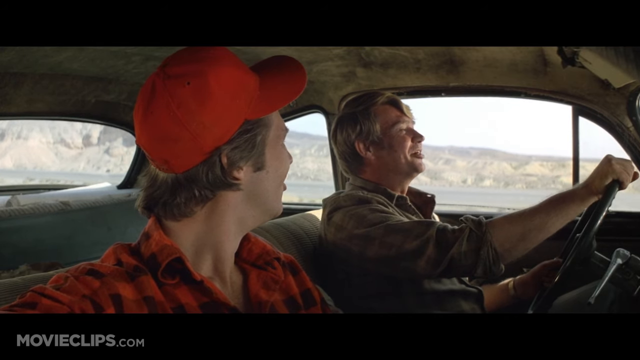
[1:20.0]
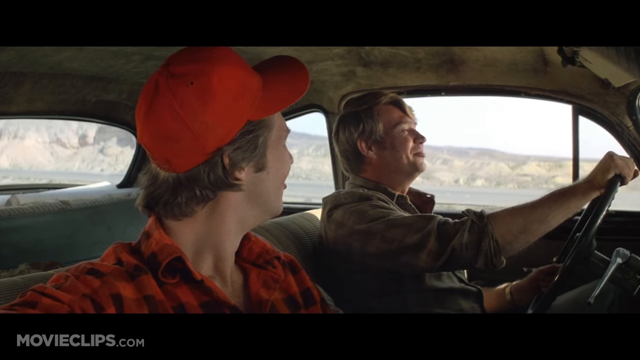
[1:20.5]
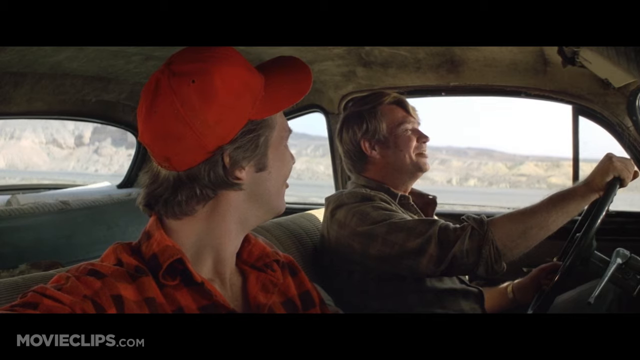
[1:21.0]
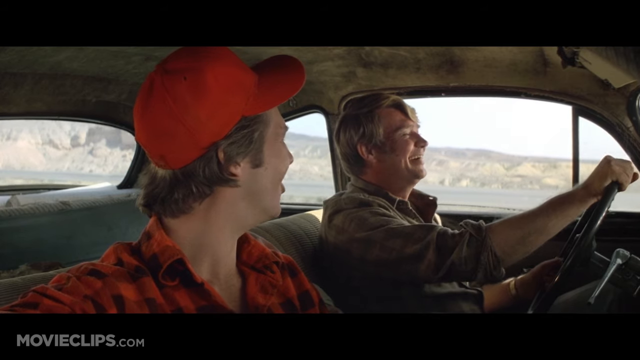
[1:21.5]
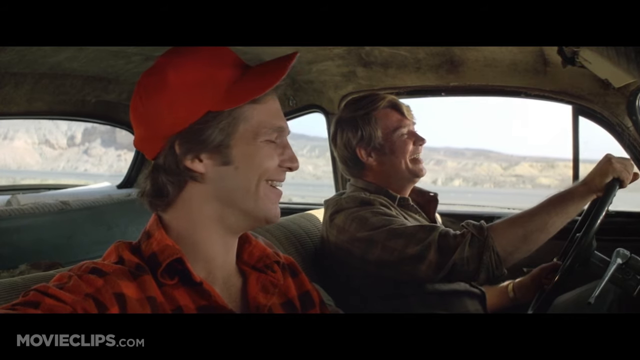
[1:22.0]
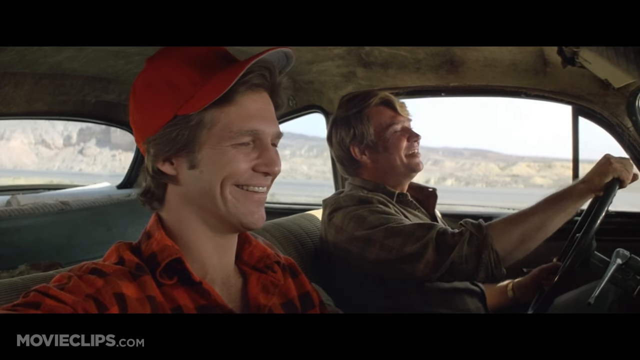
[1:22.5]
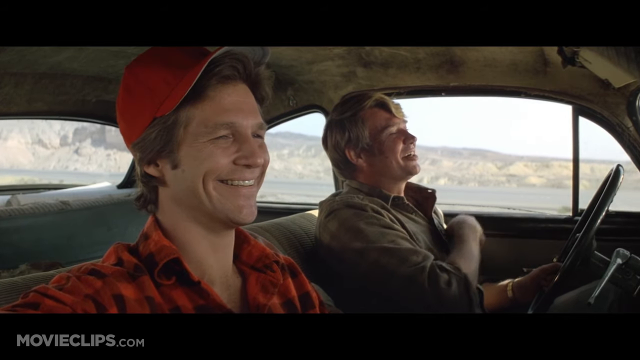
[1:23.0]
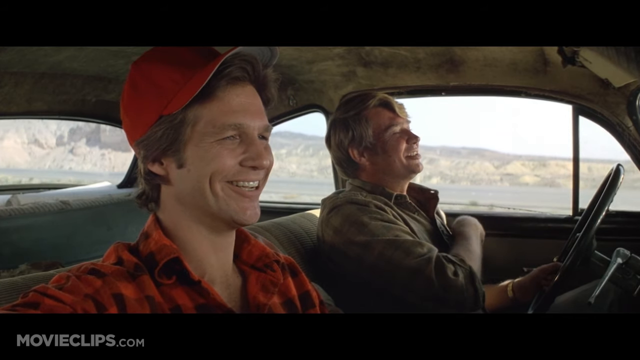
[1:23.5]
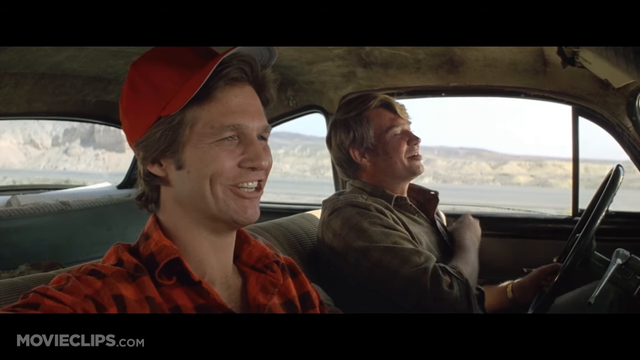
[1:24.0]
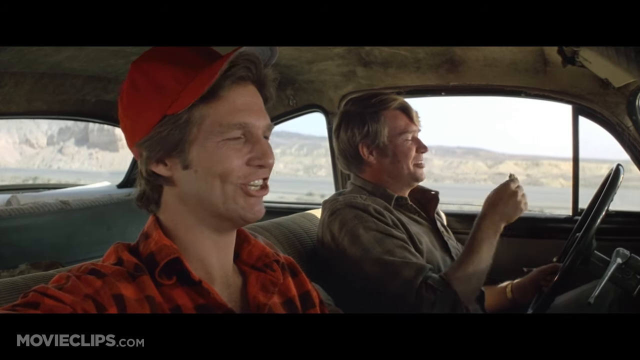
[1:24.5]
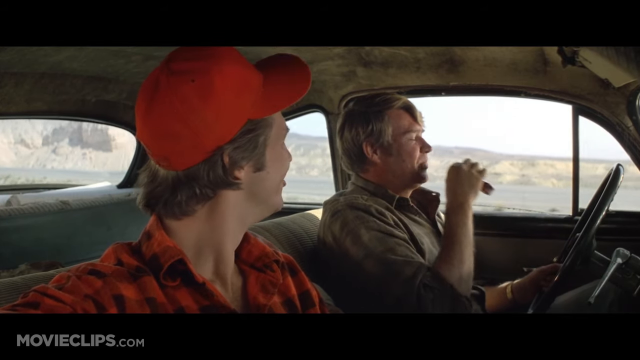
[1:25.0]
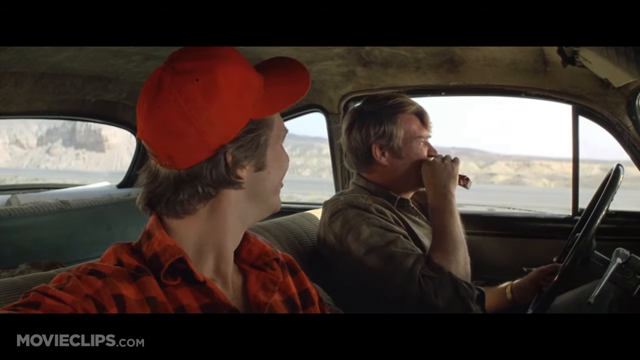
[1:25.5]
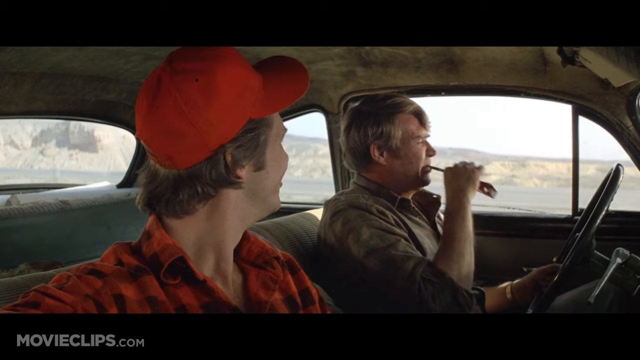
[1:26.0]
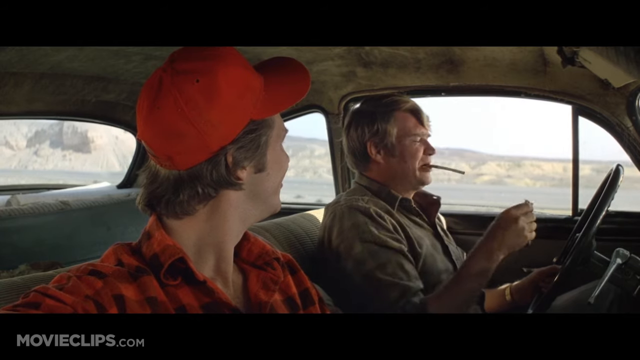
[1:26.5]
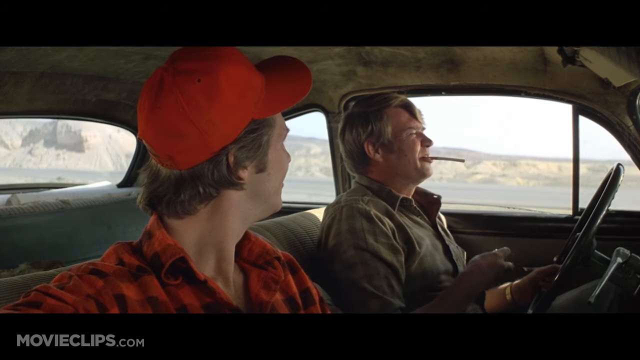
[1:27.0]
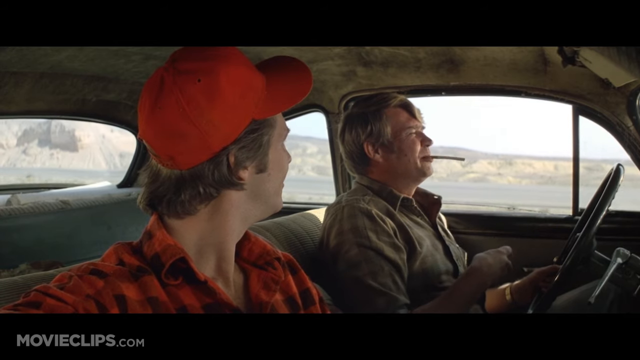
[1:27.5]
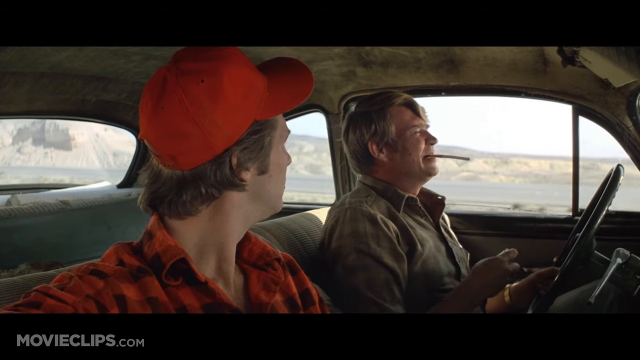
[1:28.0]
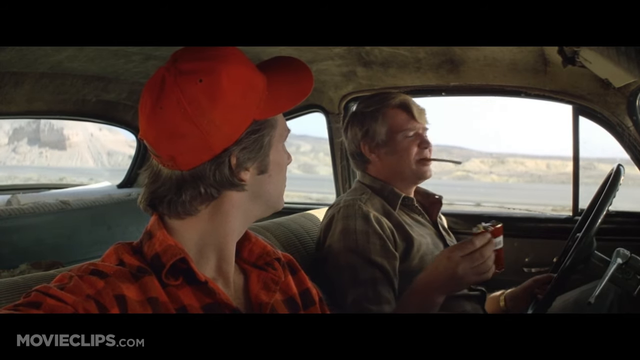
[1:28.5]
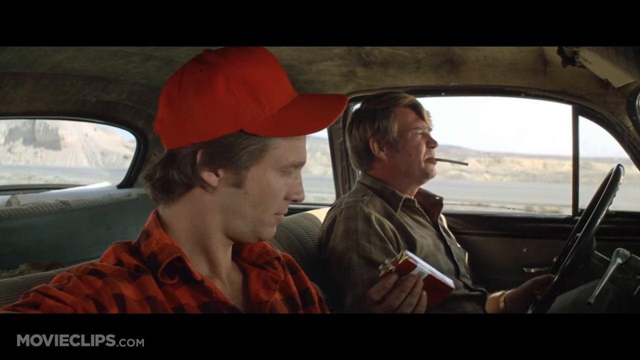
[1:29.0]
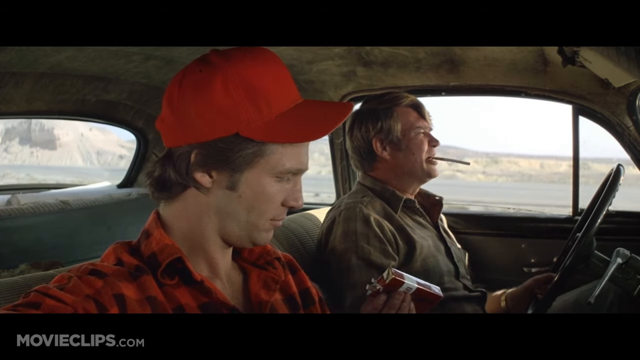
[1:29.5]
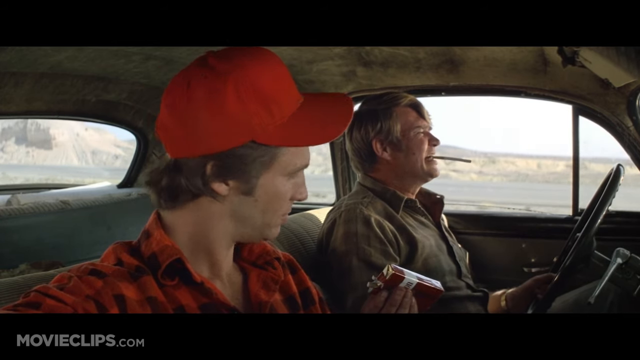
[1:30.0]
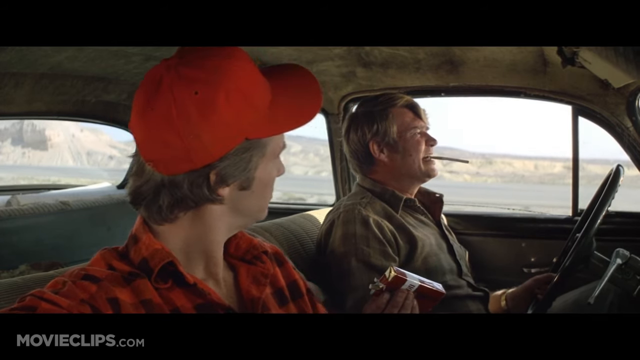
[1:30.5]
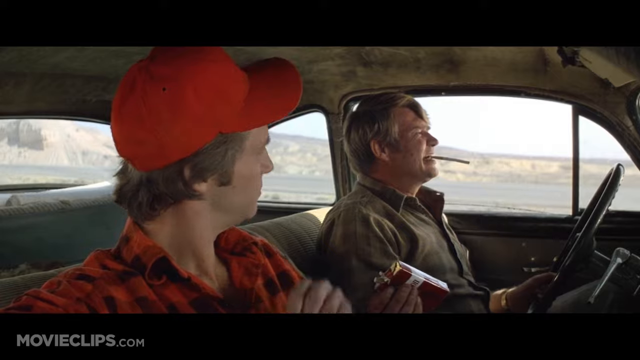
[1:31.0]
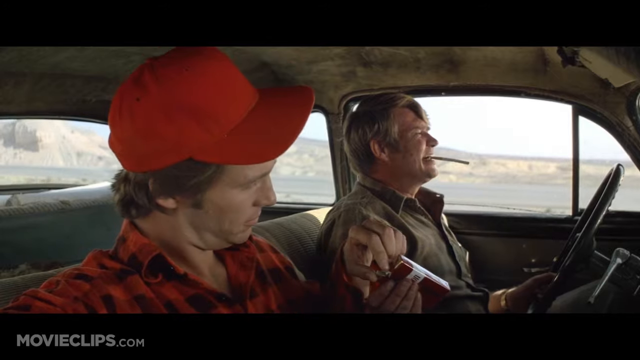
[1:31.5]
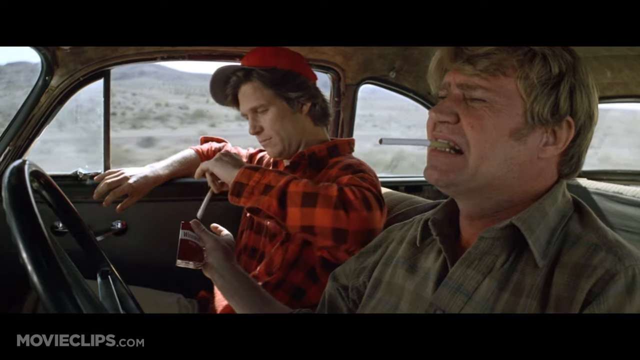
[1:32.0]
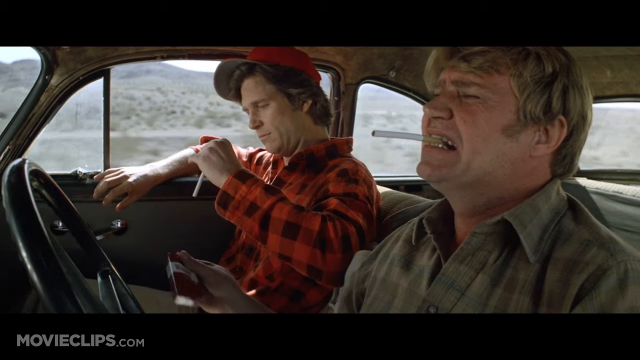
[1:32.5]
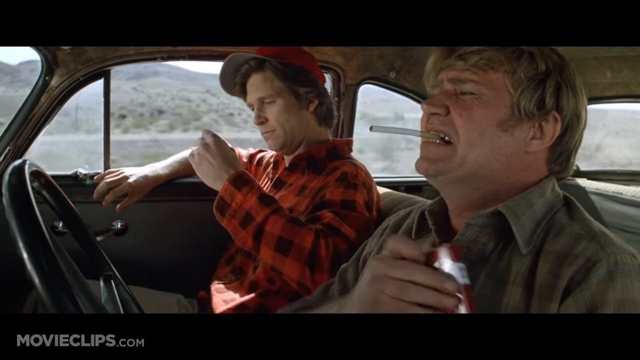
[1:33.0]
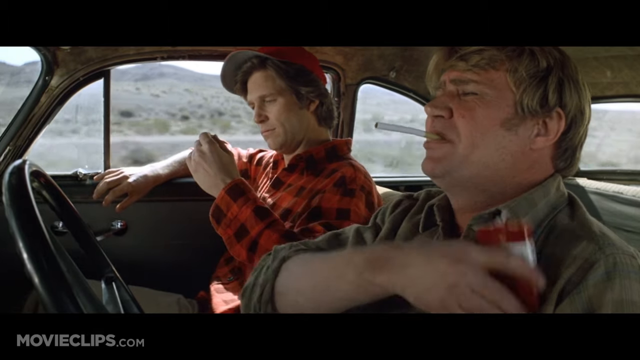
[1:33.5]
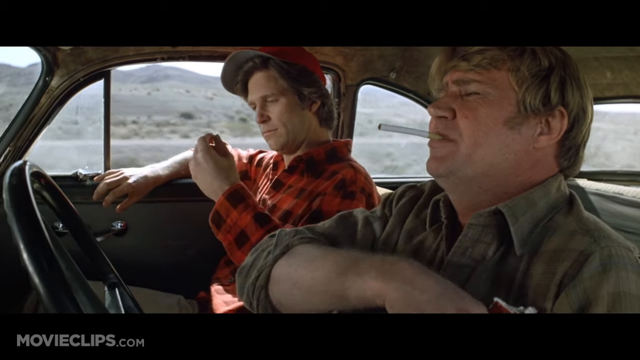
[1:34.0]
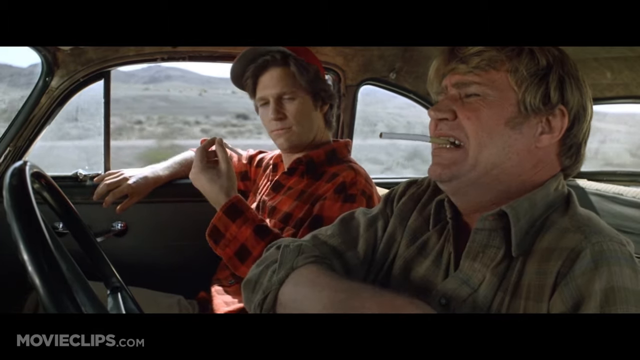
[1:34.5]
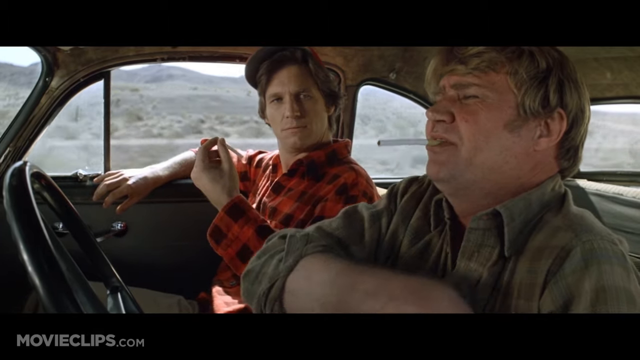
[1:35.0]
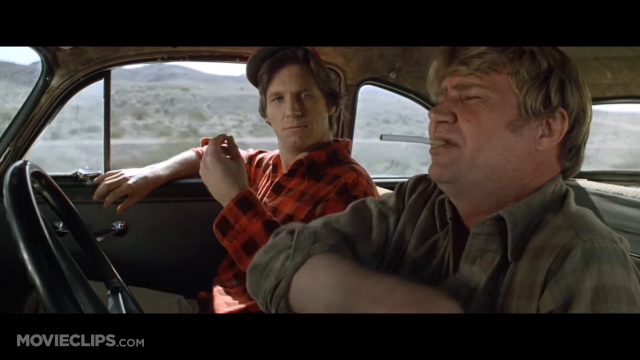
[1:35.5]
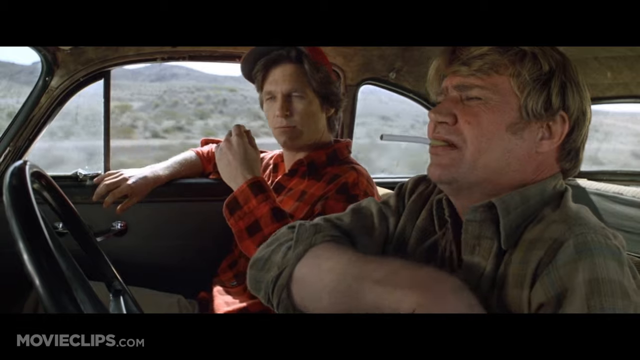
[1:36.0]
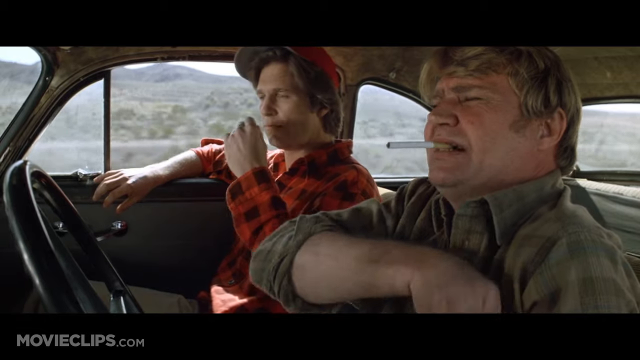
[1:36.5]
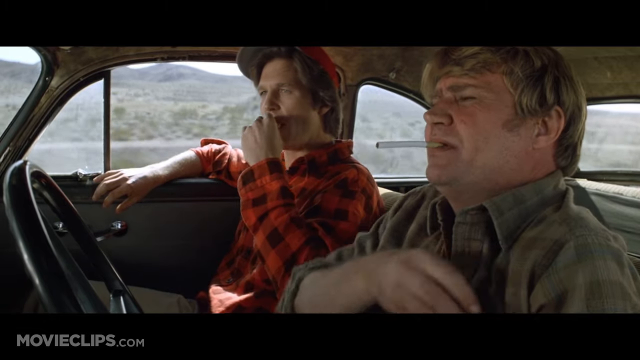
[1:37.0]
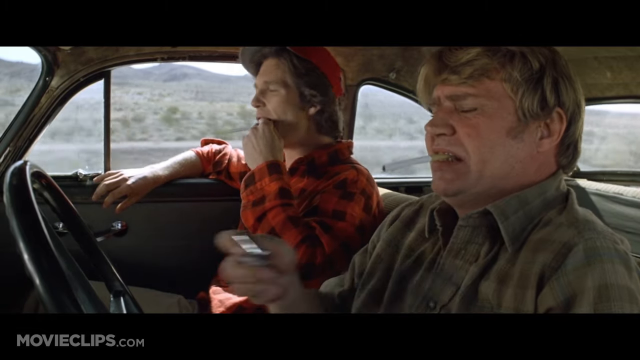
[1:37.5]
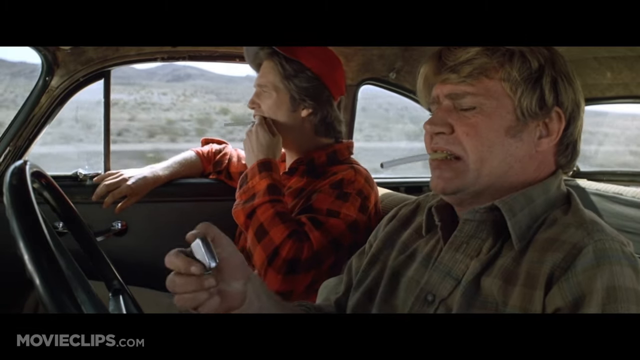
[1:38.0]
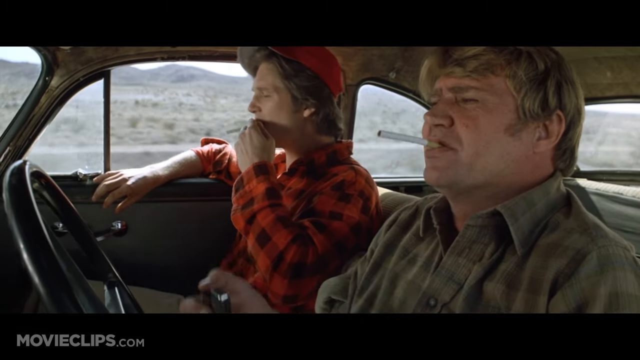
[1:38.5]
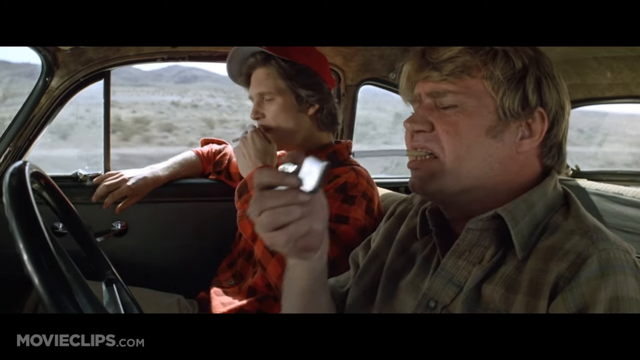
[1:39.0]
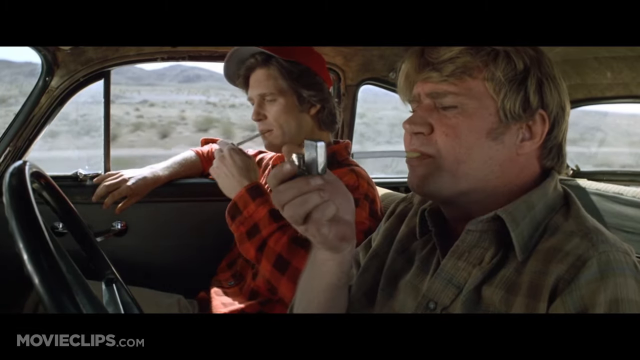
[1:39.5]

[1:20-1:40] The two men are still driving on the road in what appears to be a very old car. The older man takes out some cigarettes and a cigarette lighter and gives one cigarette to the younger man. The younger man looks at the cigarette as if it were something else, possibly because he has never smoked; he smells it and then puts it in his mouth. The older man puts a cigarette in his mouth and lights it with the lighter while his other hand holds the steering wheel. The younger man does not seem to know how to hold the cigarette and looks like he does not smoke at all. As they keep driving, they chat and laugh, still on the road.